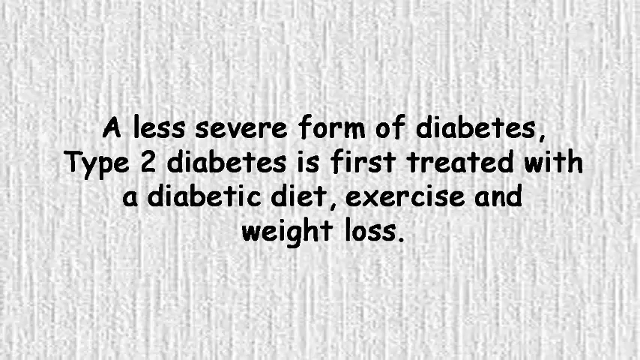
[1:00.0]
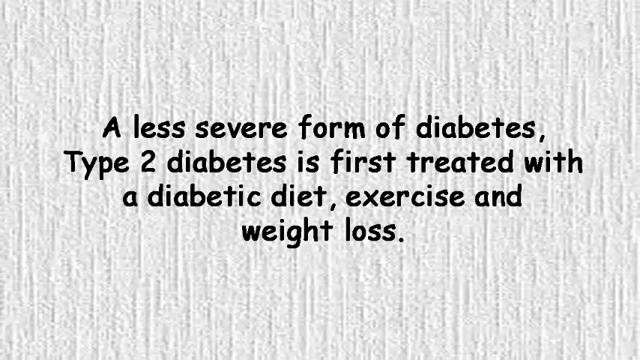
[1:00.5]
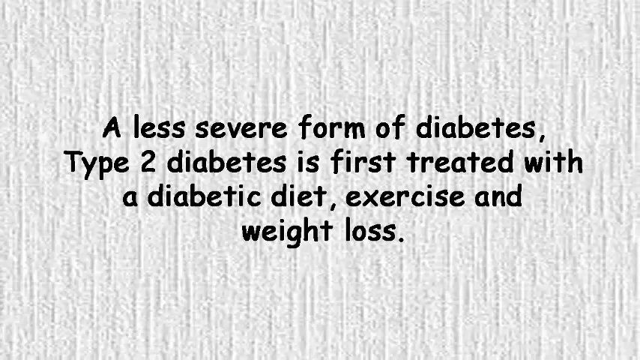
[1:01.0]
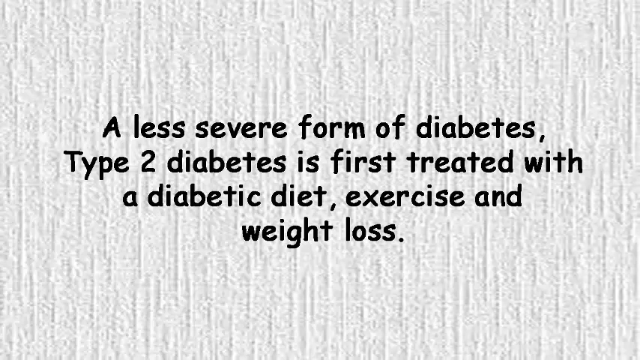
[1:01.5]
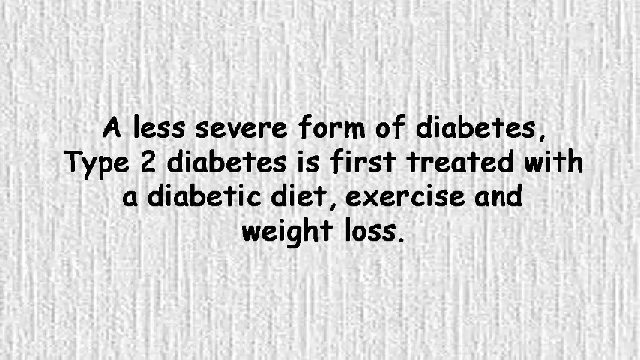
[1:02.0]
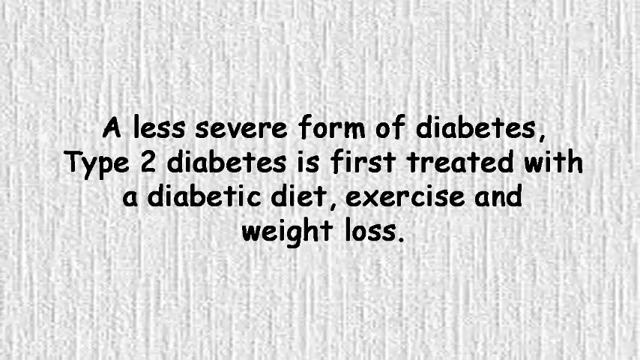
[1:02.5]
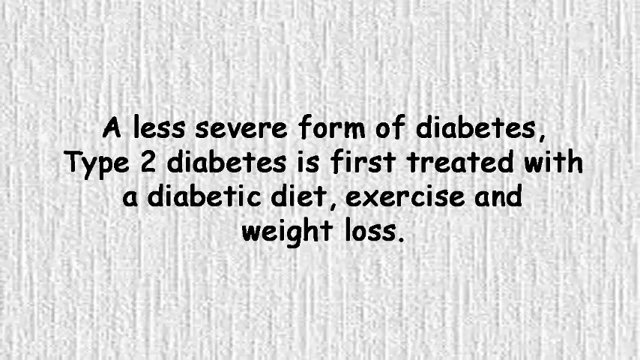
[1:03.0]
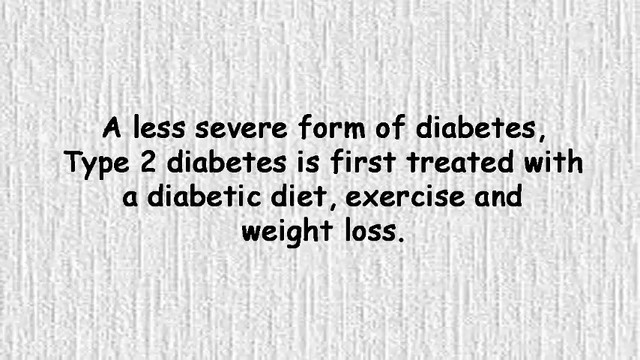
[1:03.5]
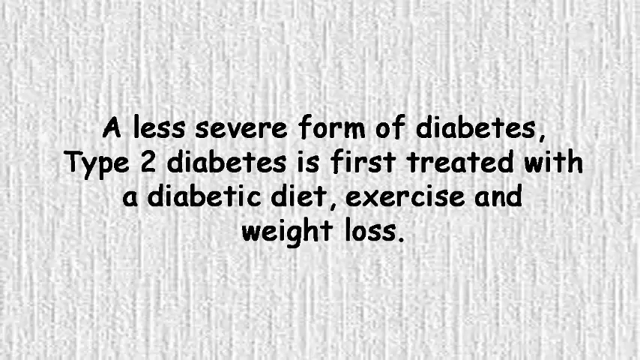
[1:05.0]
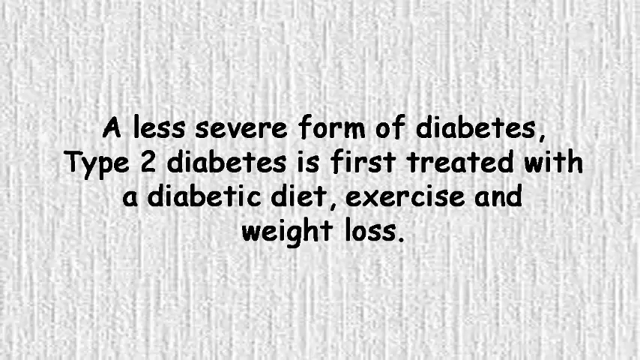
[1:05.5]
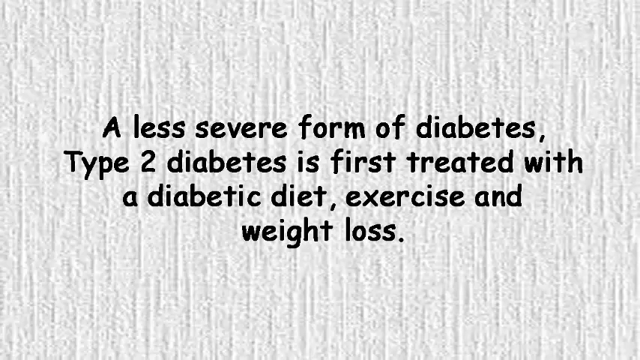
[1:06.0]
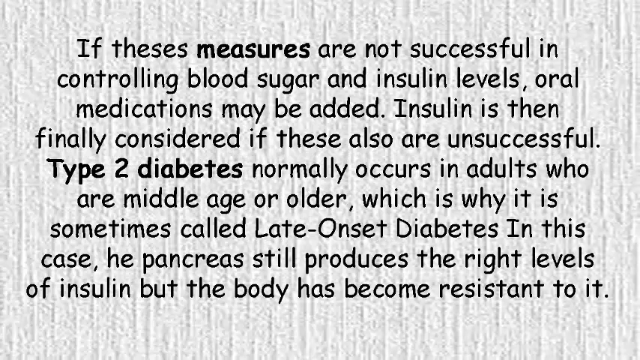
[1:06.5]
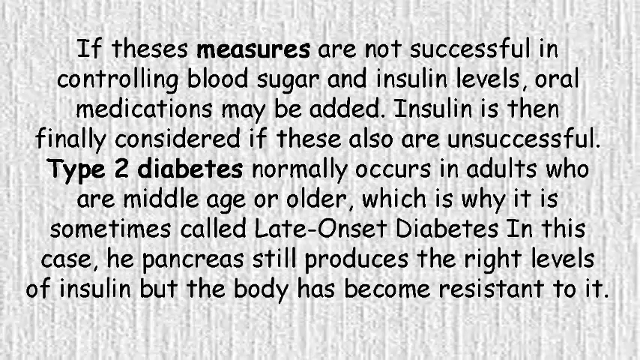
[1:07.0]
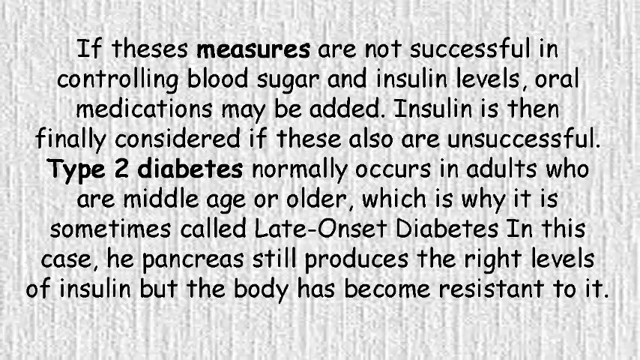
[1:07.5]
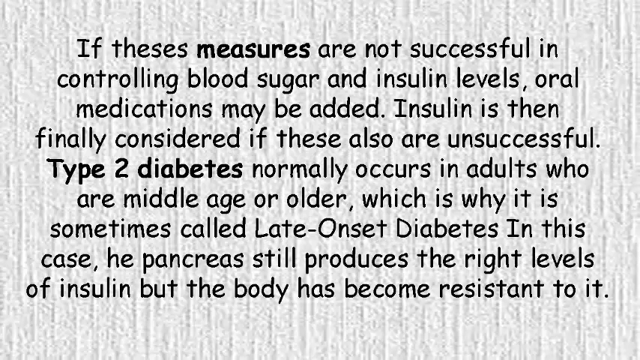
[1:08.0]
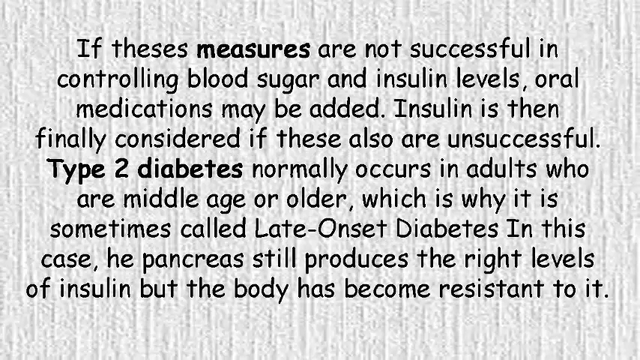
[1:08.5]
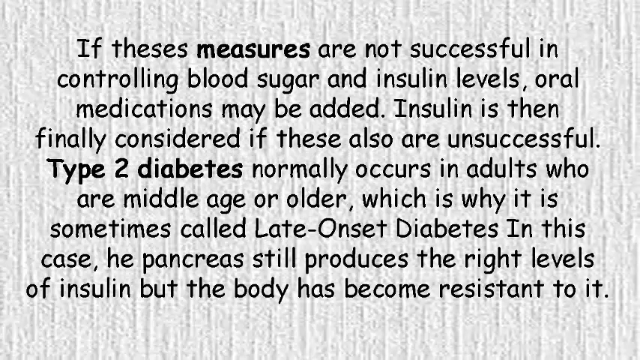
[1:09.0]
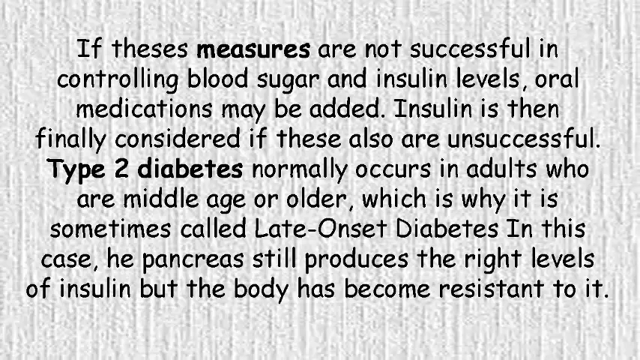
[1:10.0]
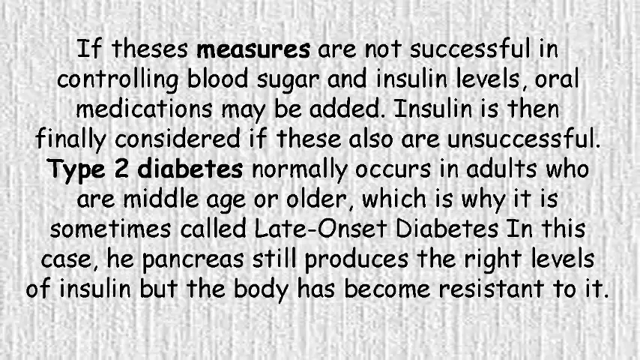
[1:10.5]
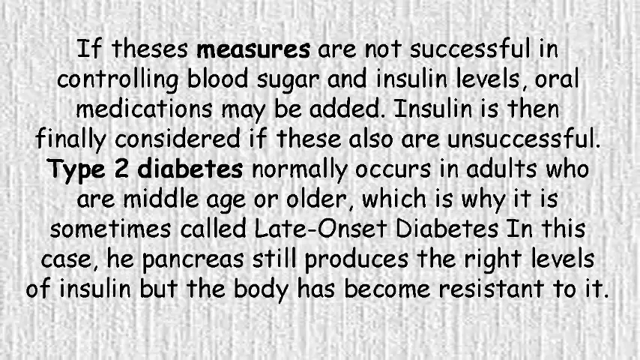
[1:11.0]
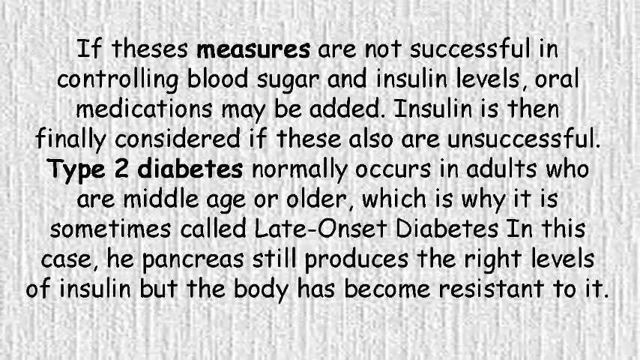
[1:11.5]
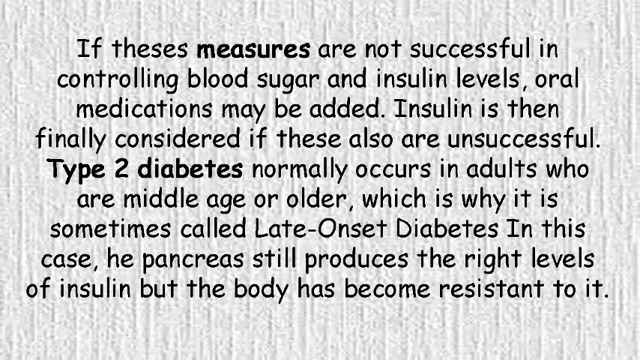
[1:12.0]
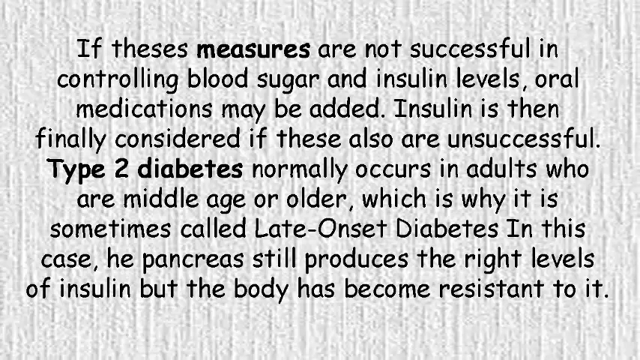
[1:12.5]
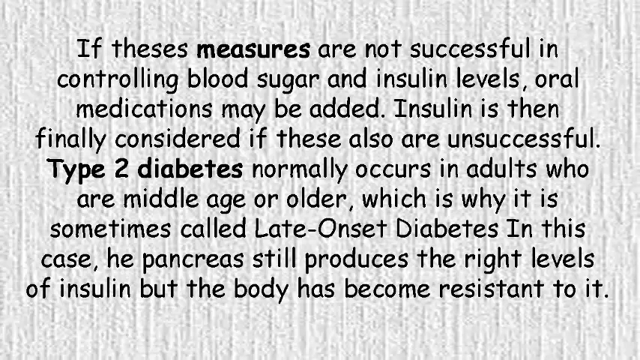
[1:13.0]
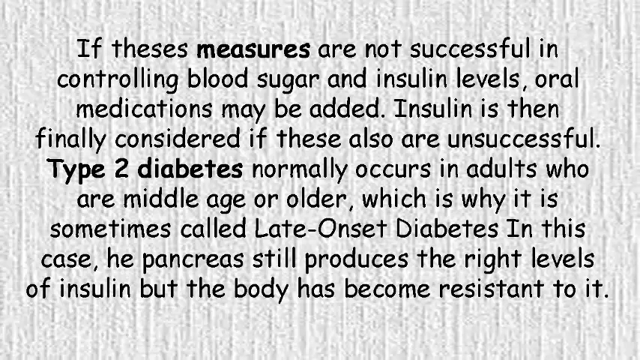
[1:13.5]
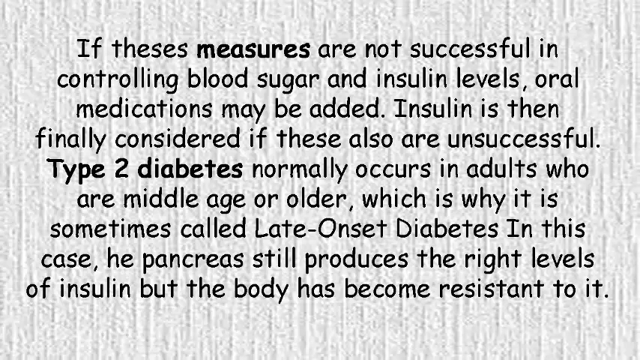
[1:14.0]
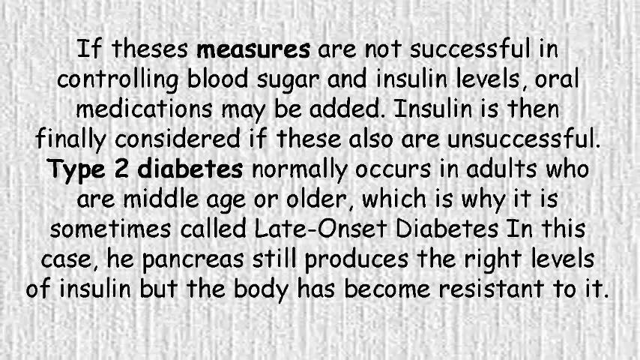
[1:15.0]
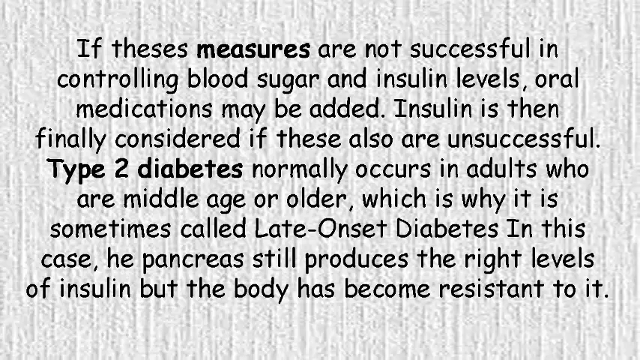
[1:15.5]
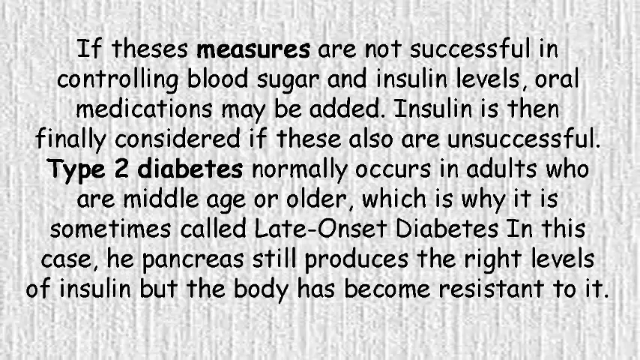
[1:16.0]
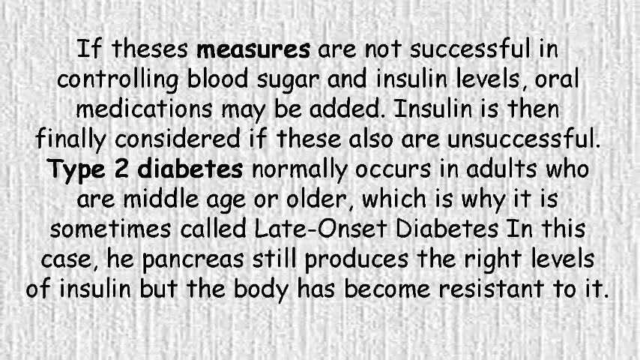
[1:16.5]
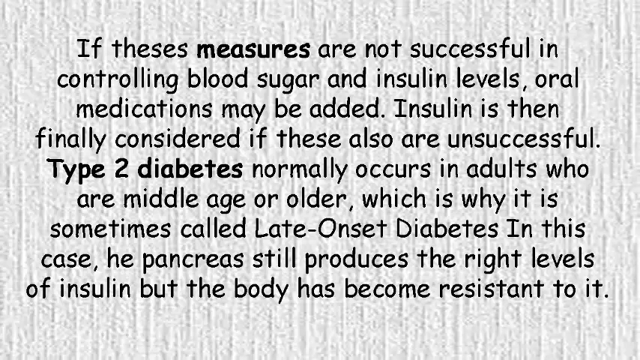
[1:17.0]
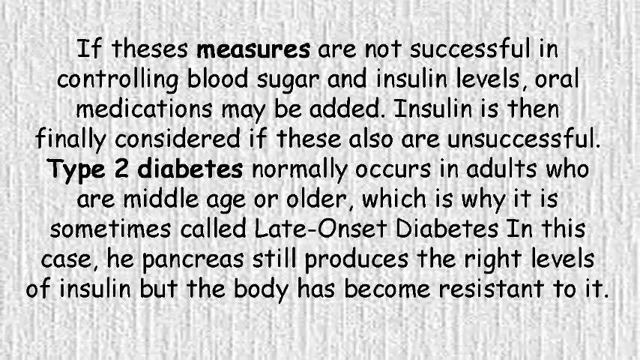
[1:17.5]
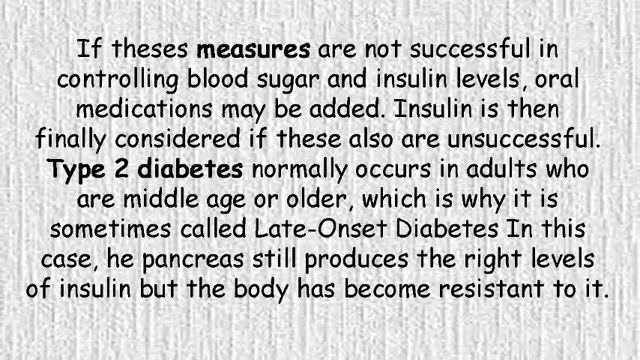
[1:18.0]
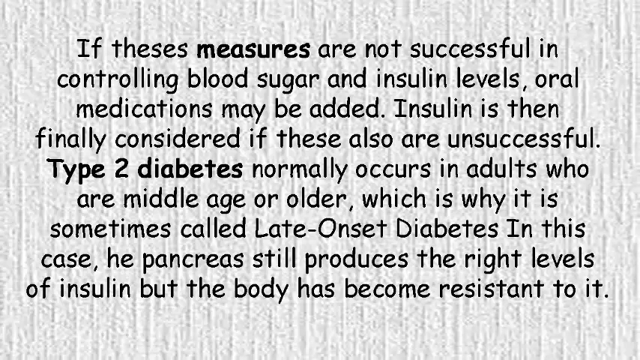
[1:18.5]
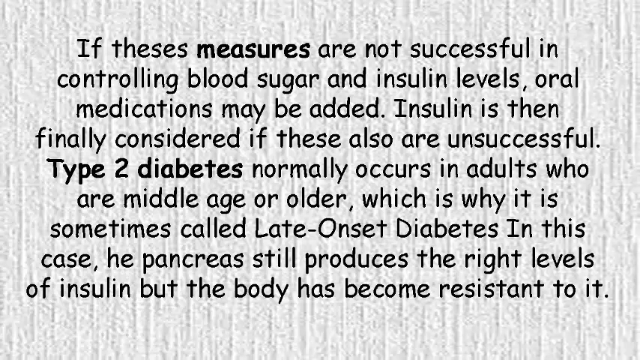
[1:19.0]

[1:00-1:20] A short paragraph reads: "A less severe form of diabetes type two diabetes is first treated with a diabetic diet, exercise and weight loss." It switches to a longer paragraph: "If these measures are not successful in controlling blood sugar and insulin levels, oral medications may be added. Insulin is then finally considered if these are also unsuccessful. Type 2 diabetes normally occurs in adults who are middle age or older which is why it is sometimes called late onset diabetes in this case. The pancreas still produces the right levels of insulin but the body has become resistant to it." The words "measures" and "type 2 diabetes" are in bold. The background stays the same; only the paragraph changes.